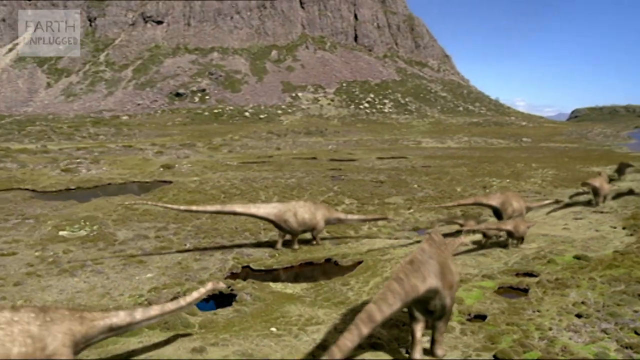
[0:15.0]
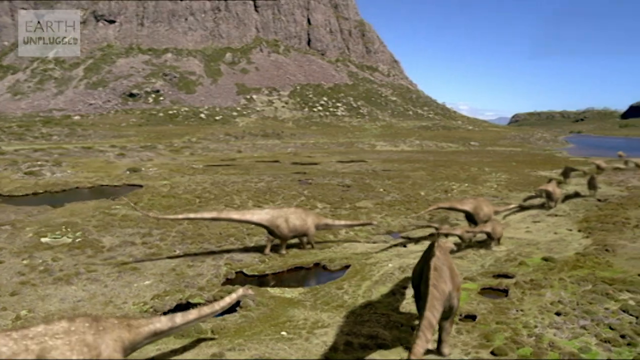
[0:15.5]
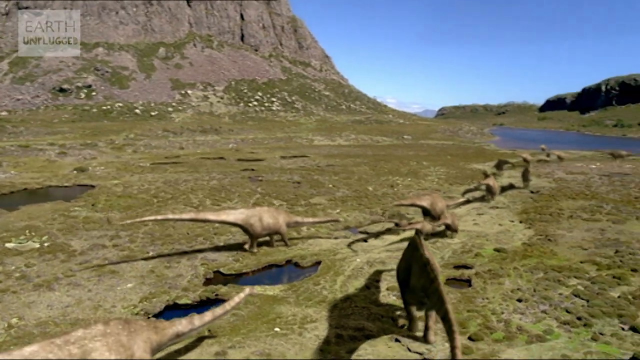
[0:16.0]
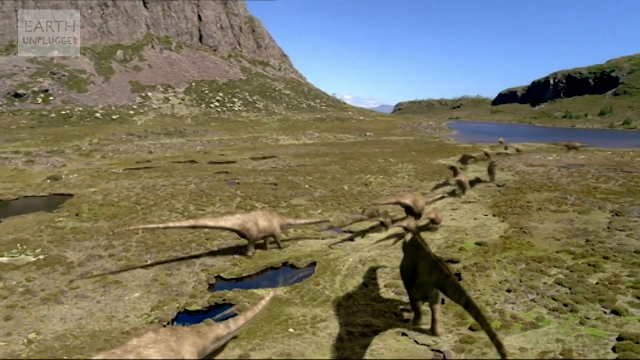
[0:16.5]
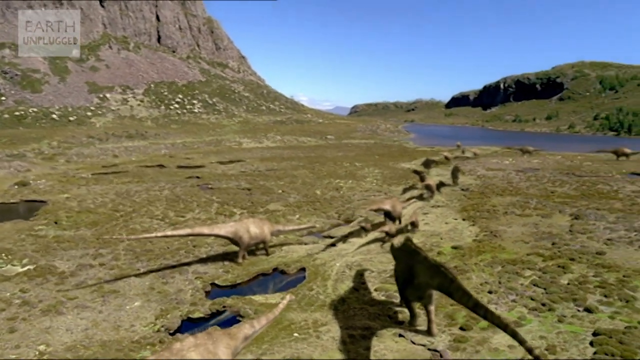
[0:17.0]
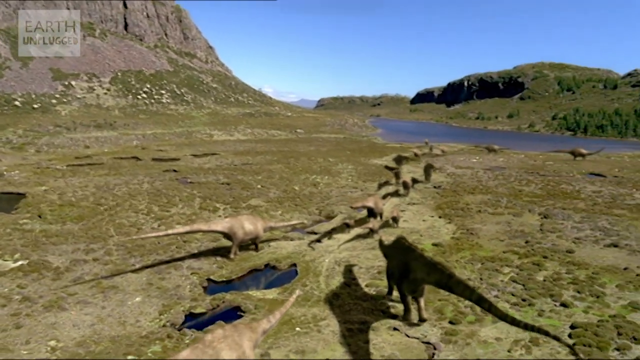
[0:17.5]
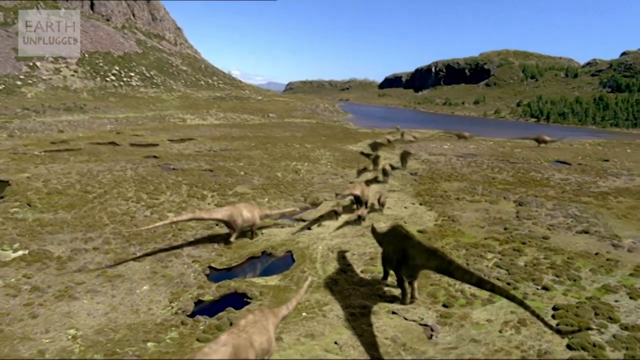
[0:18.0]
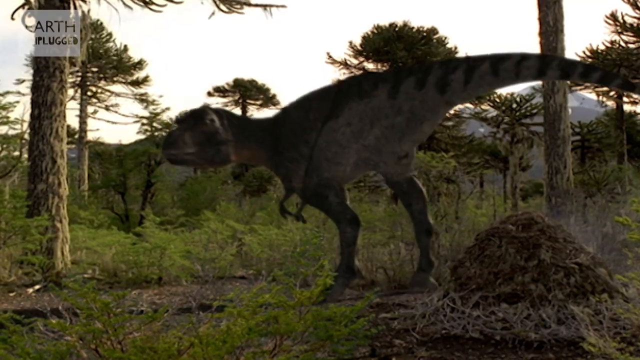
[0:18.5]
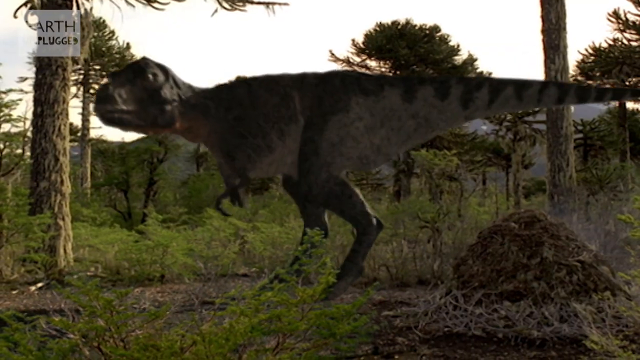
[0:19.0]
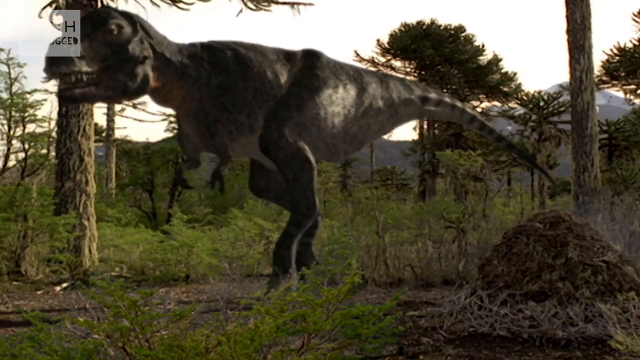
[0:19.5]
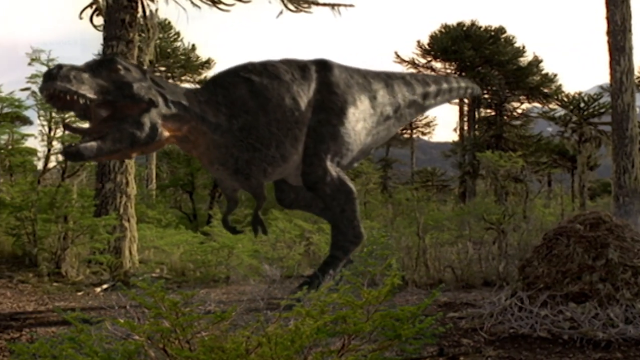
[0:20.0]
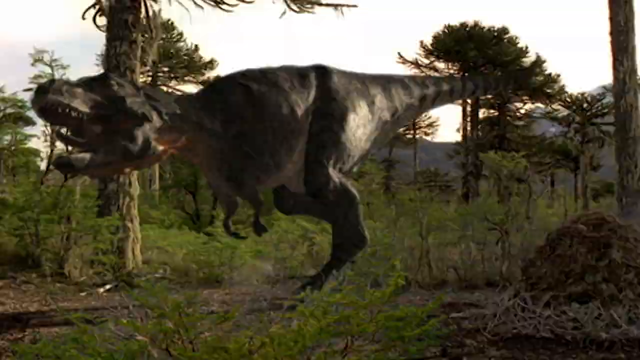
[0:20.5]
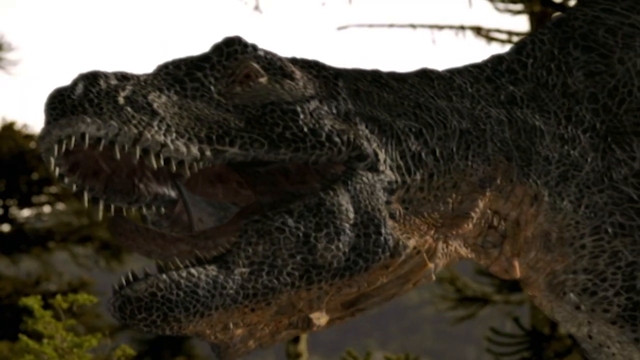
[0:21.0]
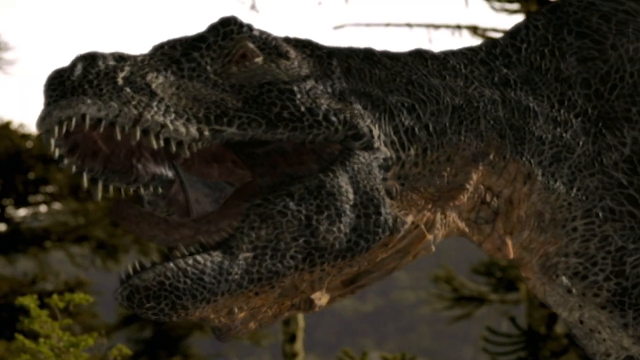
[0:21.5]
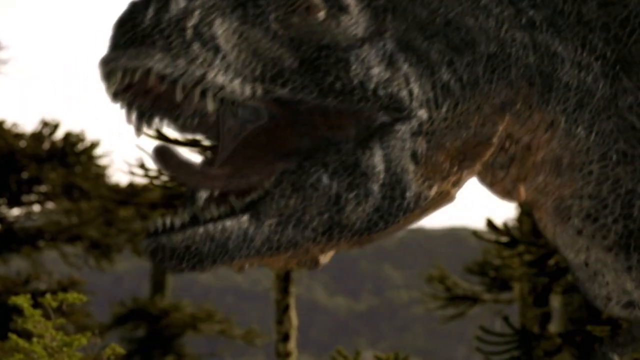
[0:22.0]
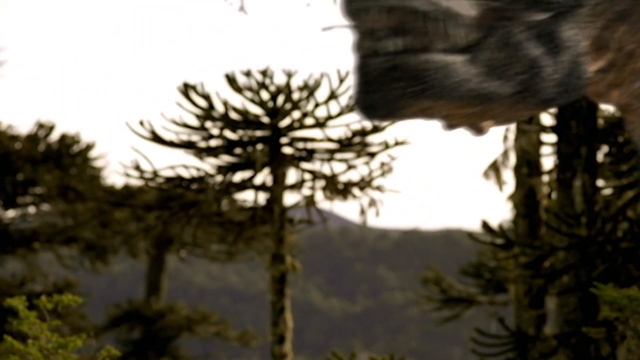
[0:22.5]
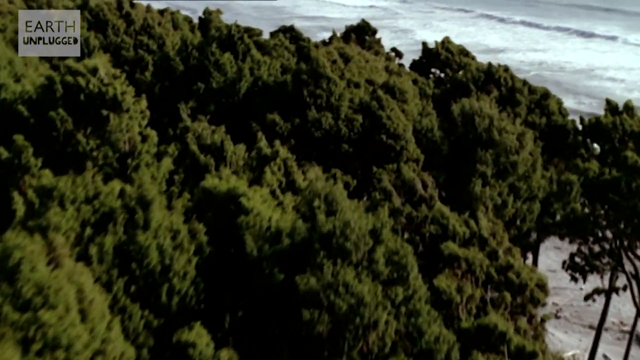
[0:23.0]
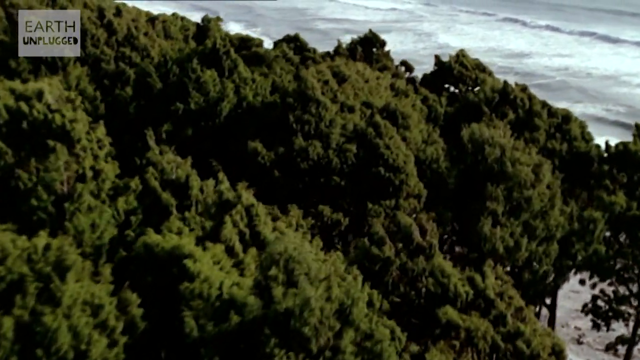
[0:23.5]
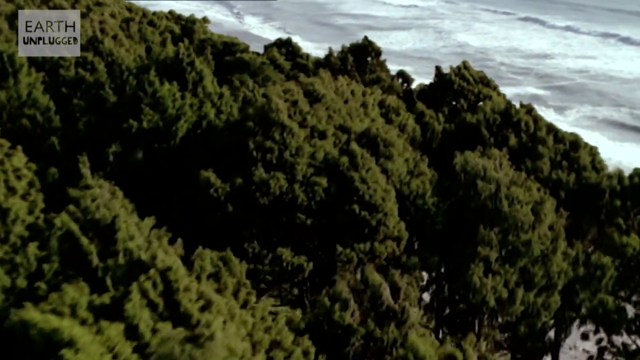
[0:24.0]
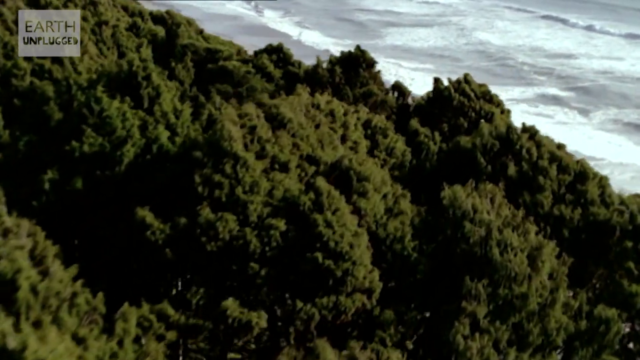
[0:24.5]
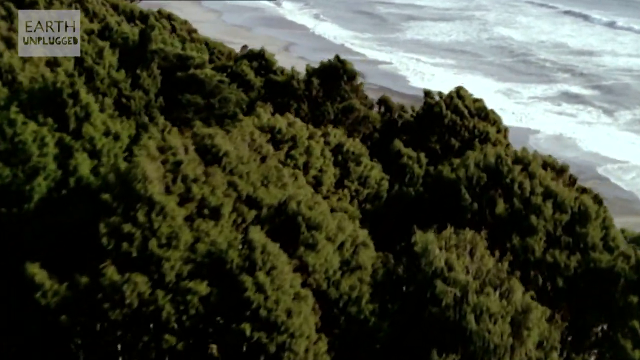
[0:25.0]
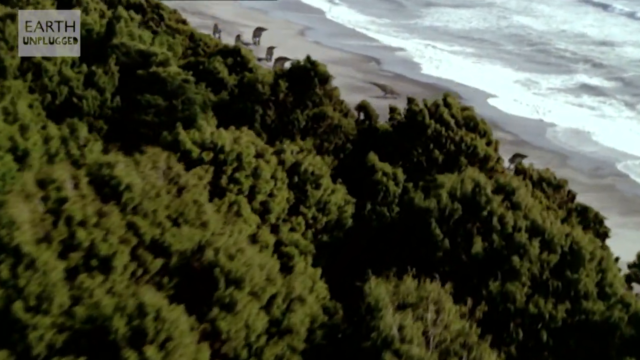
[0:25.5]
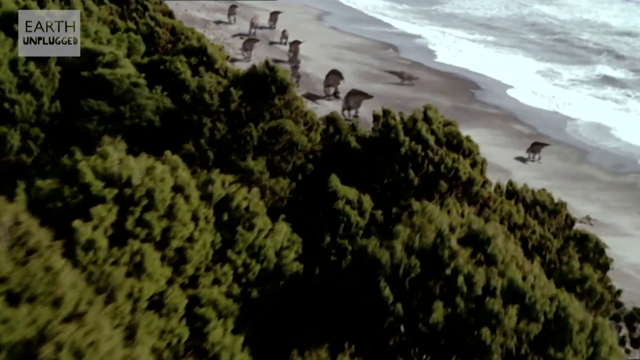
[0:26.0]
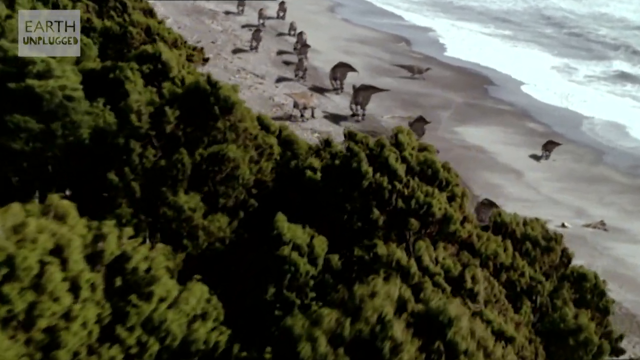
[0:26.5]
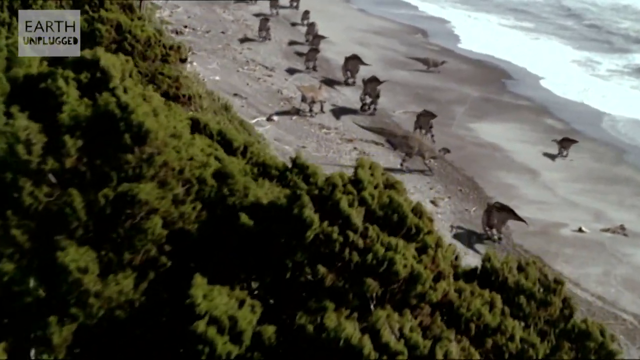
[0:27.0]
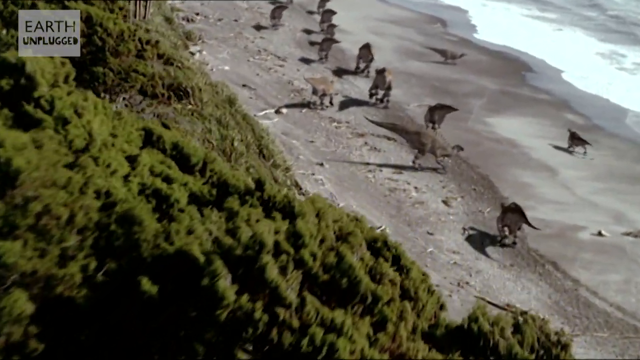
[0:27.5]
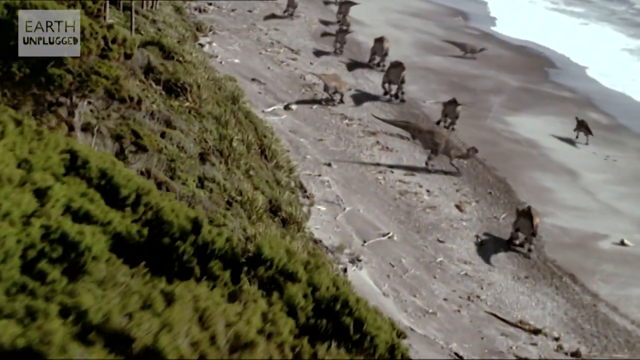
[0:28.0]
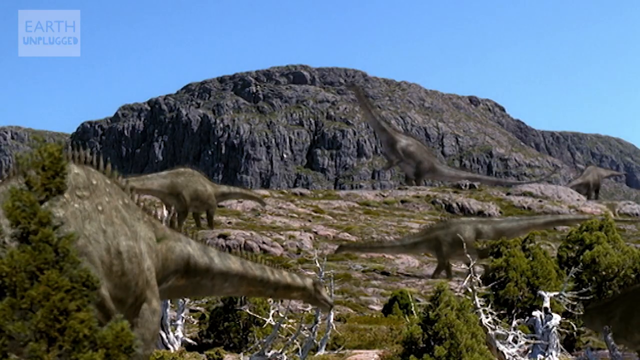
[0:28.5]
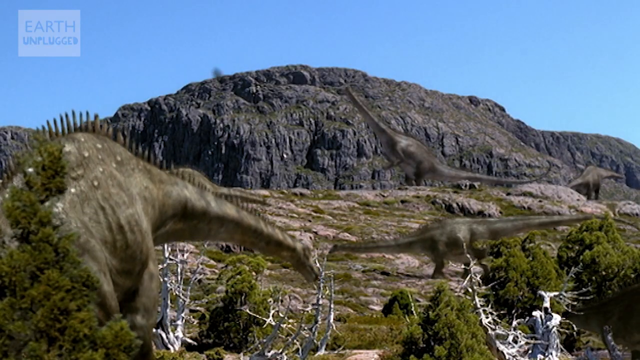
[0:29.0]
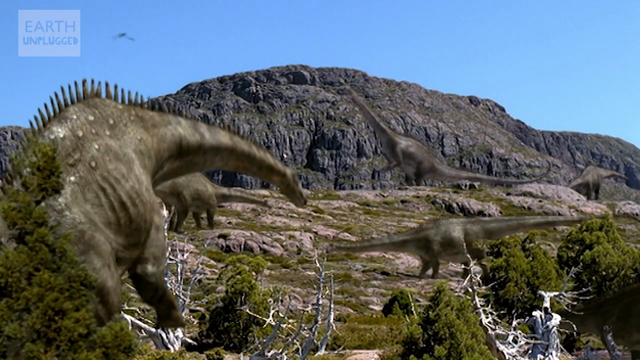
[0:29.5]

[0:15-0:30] A group of probably about six or seven long-necked dinosaurs walks through a green area toward a body of water, with a mountain in the background. The shot cuts to the T-Rex, which turns to face what appears to be their direction, though they are not shown on the same screen, and roars with its tail up in the air. An overview of the trees follows. Then the dinosaurs are on what appears to be a beach, on wet sand by the body of water, with small waves moving. Probably about 10 to 15 dinosaurs walk along the beach, and some of them might be drinking the water, though it is hard to tell. After that, about four dinosaurs seem to be eating something off the ground; one lifts its neck, and a mountain is visible in the background.